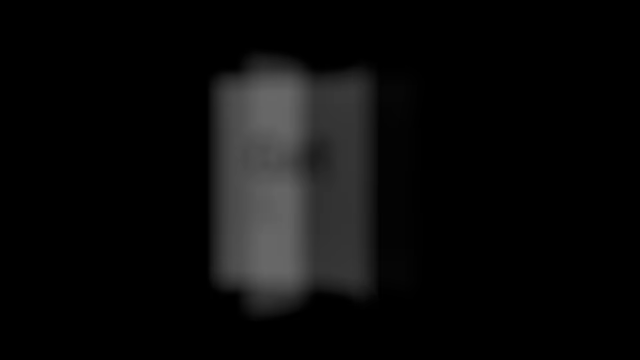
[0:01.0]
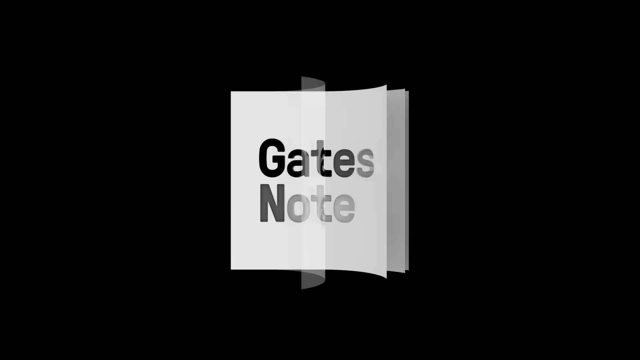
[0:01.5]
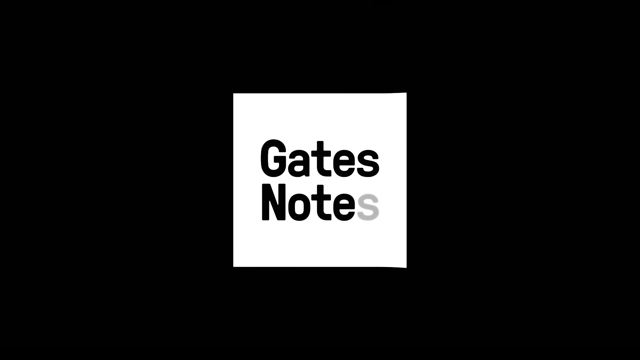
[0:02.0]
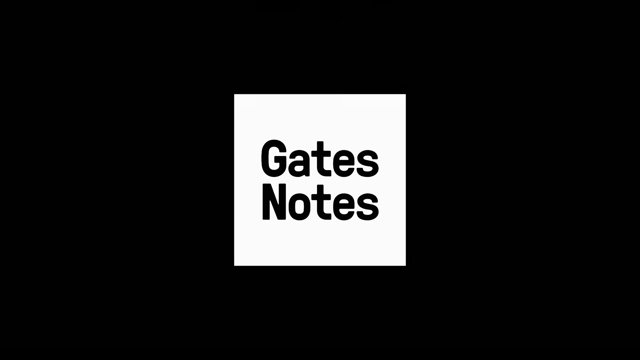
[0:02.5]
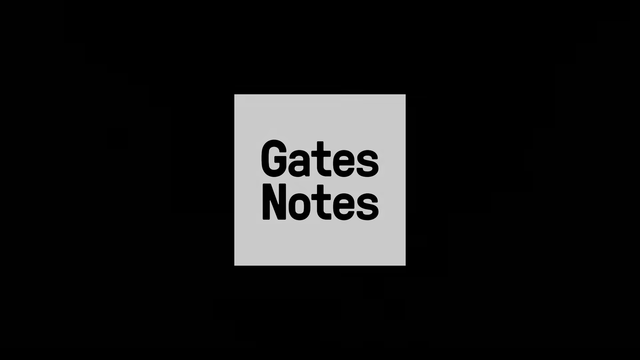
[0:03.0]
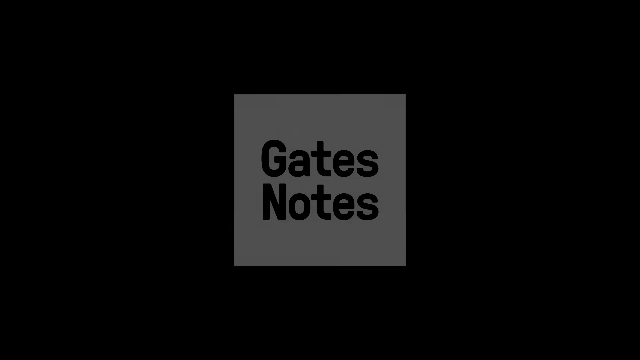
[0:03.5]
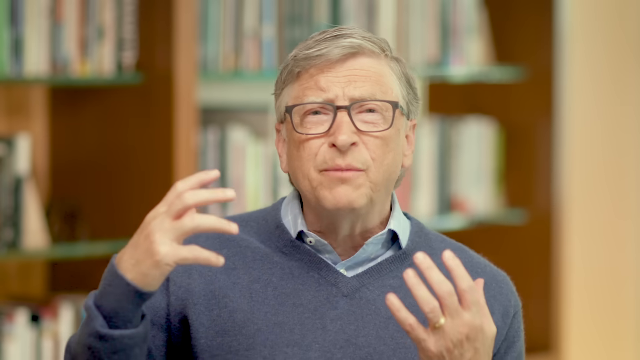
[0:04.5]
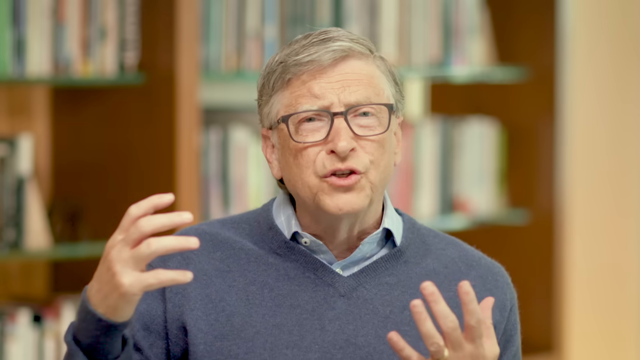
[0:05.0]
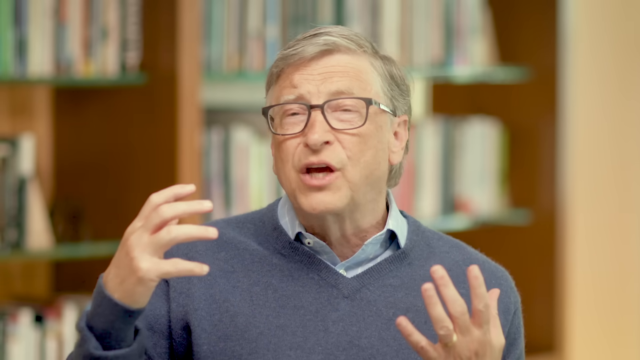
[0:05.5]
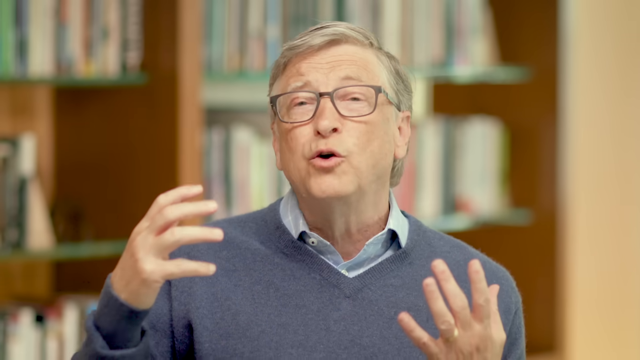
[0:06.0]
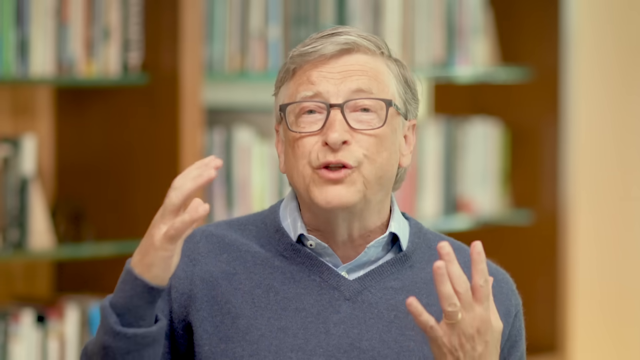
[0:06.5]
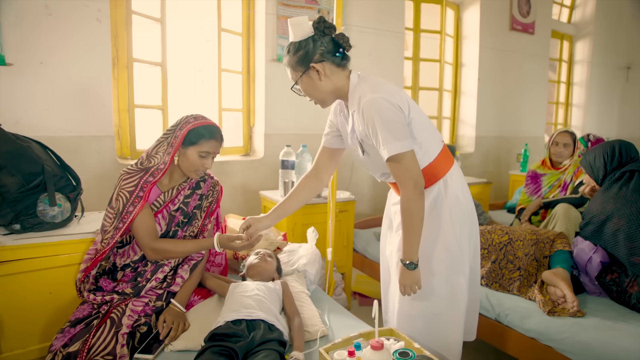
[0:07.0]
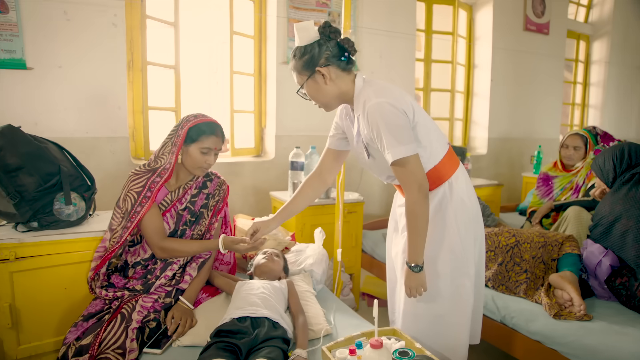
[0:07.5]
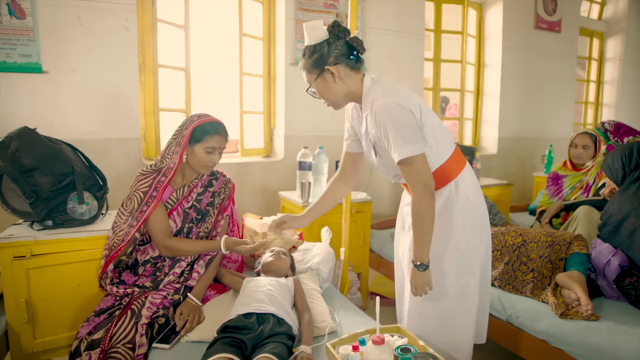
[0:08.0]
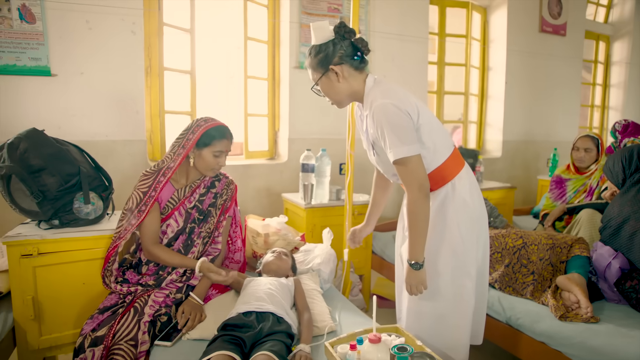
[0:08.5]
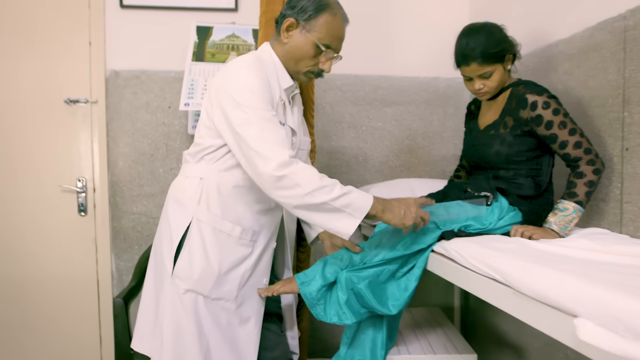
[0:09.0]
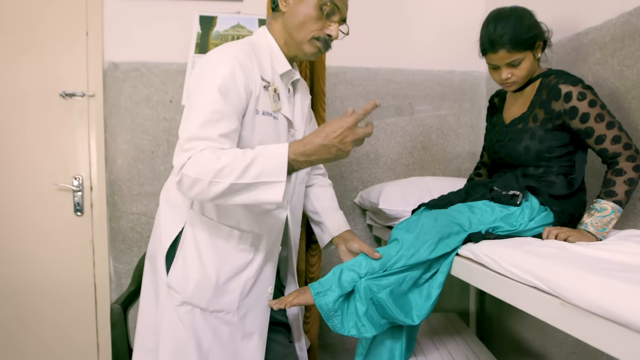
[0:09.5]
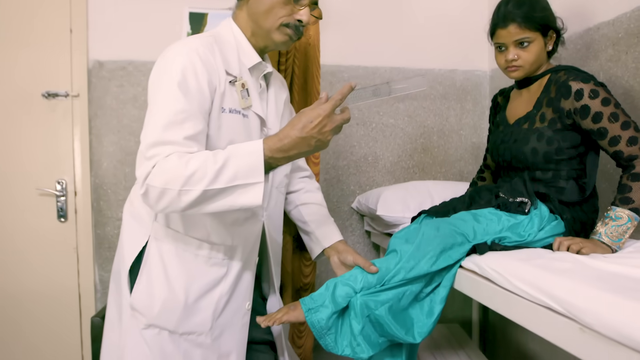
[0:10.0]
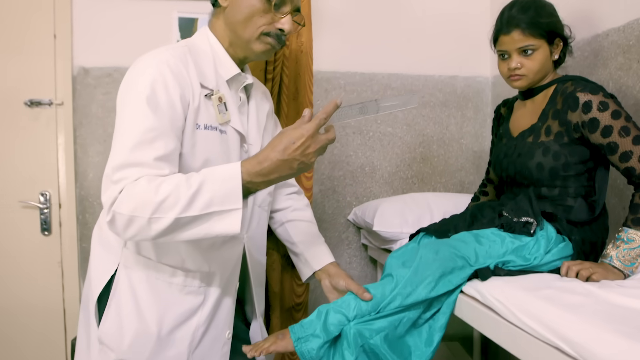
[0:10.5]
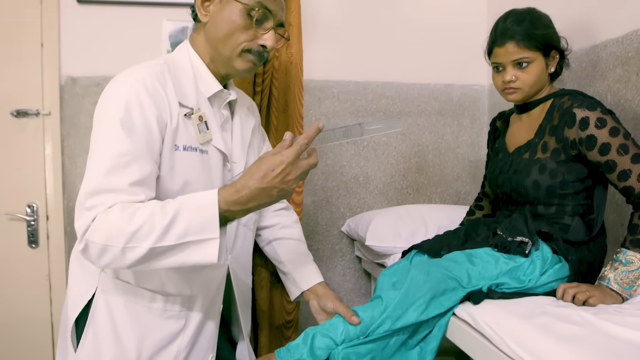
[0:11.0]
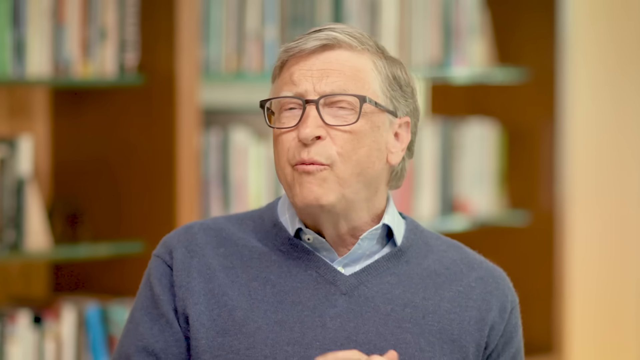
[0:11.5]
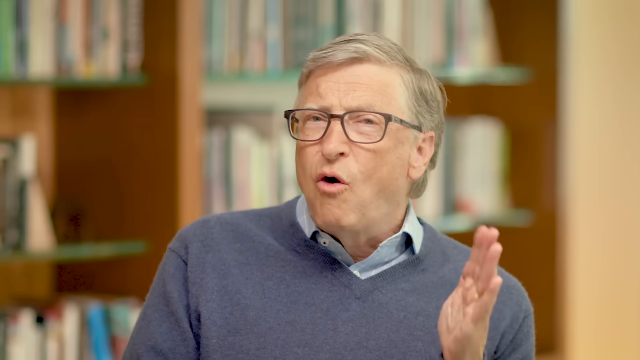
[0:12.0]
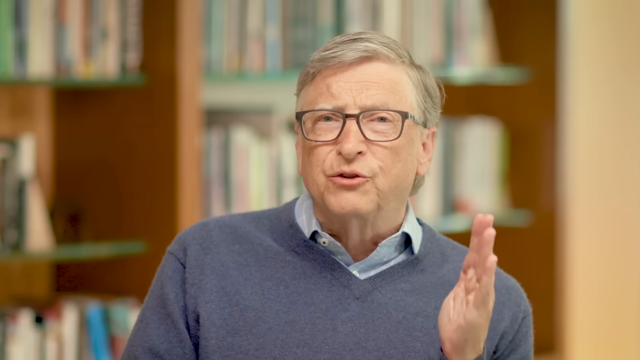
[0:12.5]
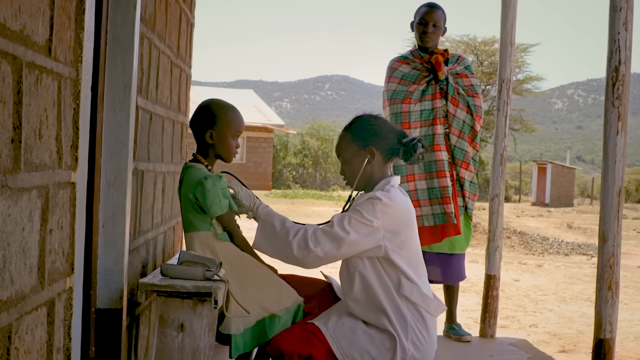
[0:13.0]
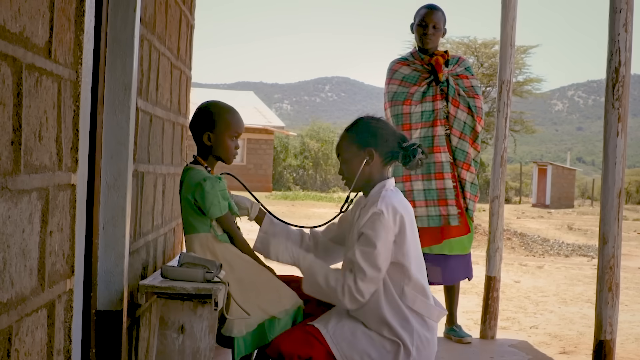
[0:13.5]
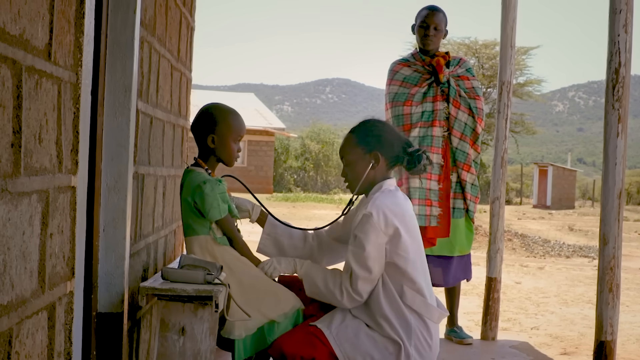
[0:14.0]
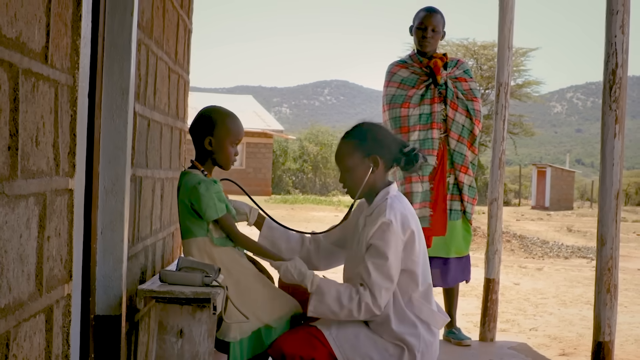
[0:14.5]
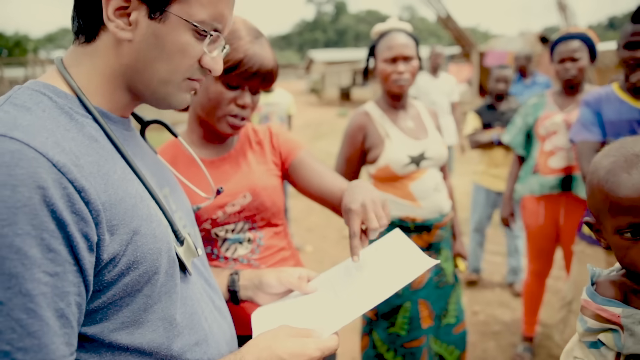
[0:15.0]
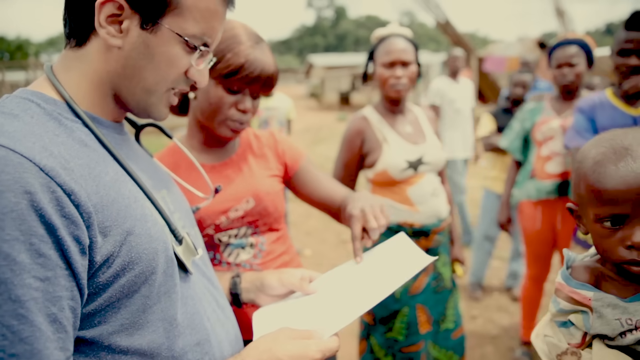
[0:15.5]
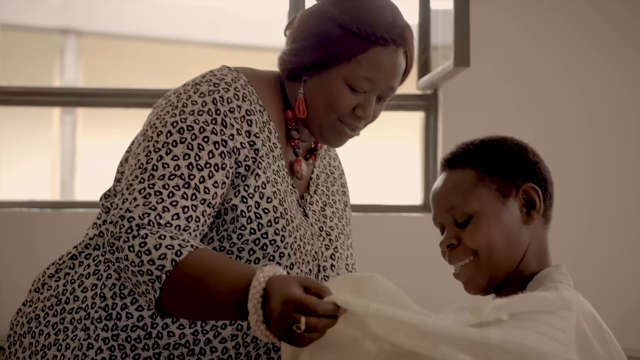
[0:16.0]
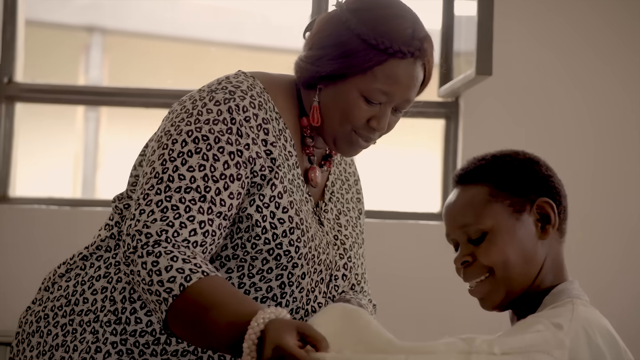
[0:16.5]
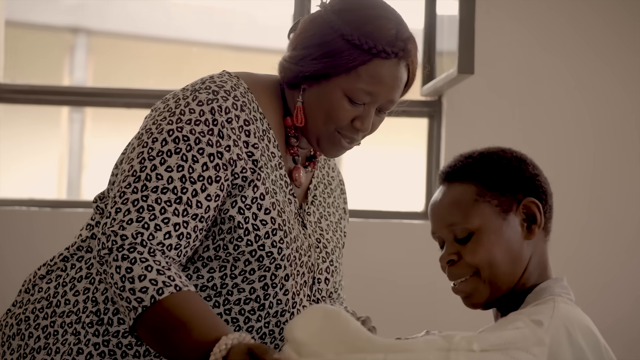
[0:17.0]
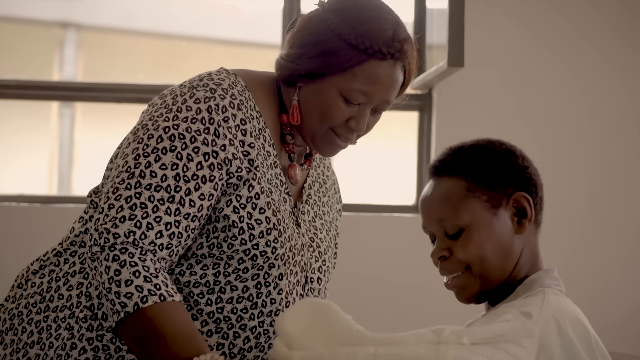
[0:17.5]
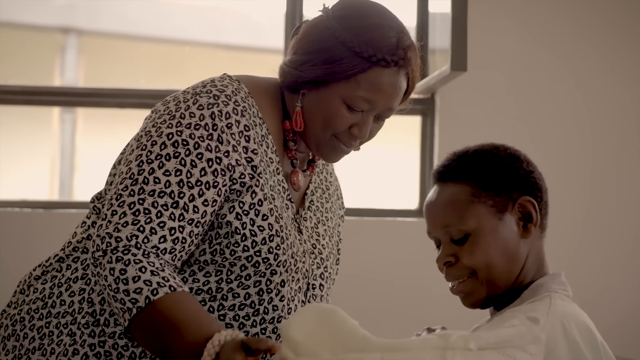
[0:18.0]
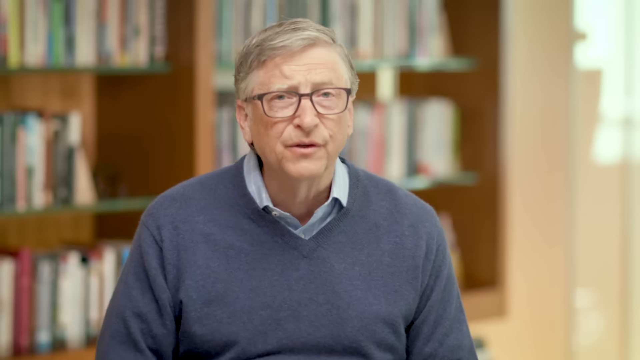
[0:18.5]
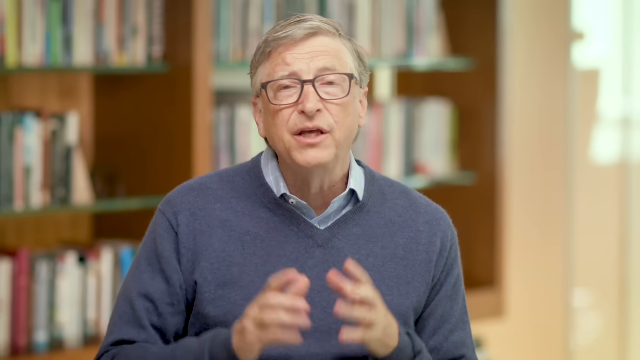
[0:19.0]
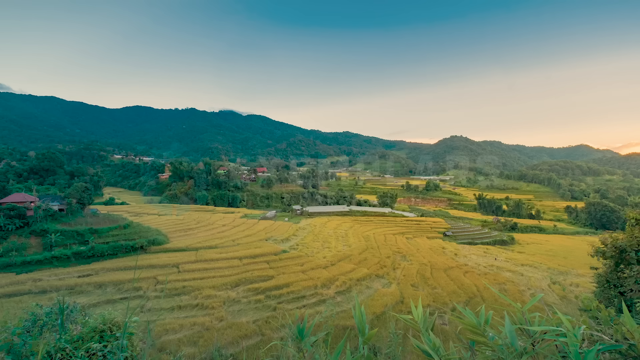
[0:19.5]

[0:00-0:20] A white man who looks to be in his late 60s or early 70s sits in a room with a blurred-out bookshelf behind him, talking towards the camera and gesturing with his hands. The video pans to a scene inside a hospital-style room, where the people look to be of Indian heritage. The scene changes to a woman sitting on a bed while a doctor tends to her. It cuts back to the man presenting, then quickly switches to an outdoor scene of a doctor tending to a young boy with a stethoscope; the people here appear to be of a different race, maybe African. The video pans to another scene of some people talking outside. They again appear to be maybe African, but the scenery differs from the beginning of the video, suggesting these are apparently different pieces of footage.